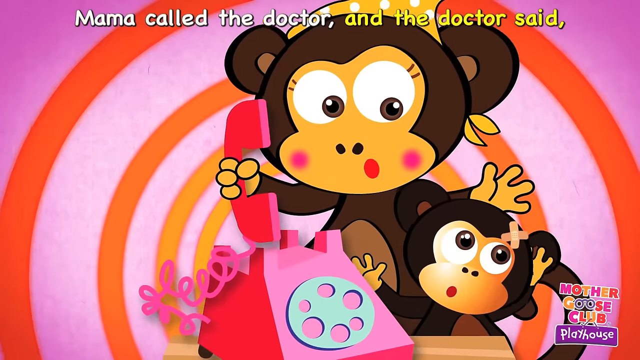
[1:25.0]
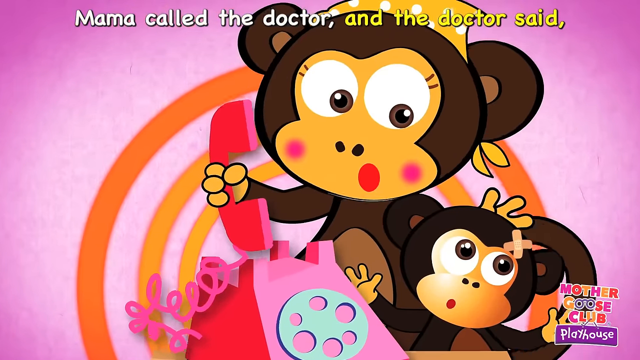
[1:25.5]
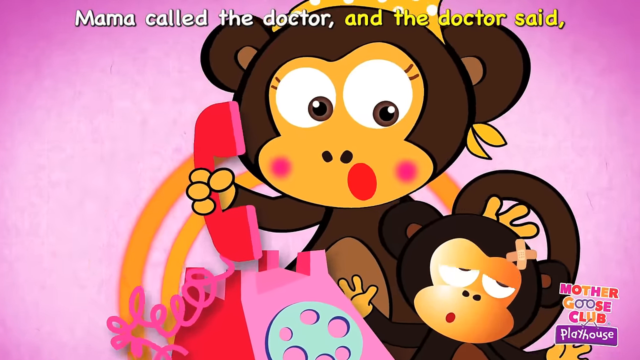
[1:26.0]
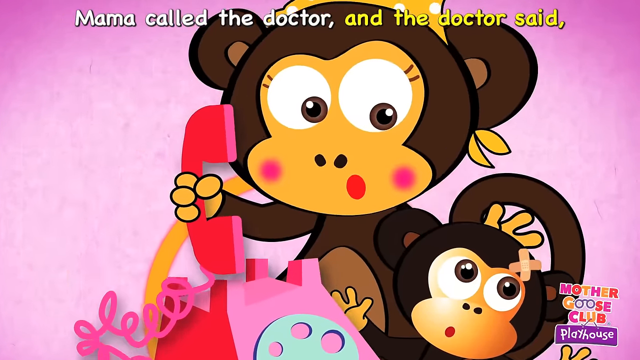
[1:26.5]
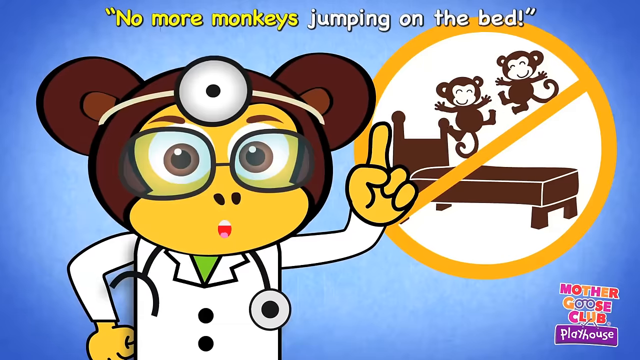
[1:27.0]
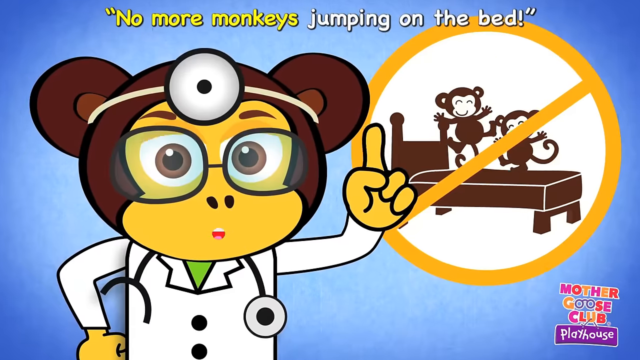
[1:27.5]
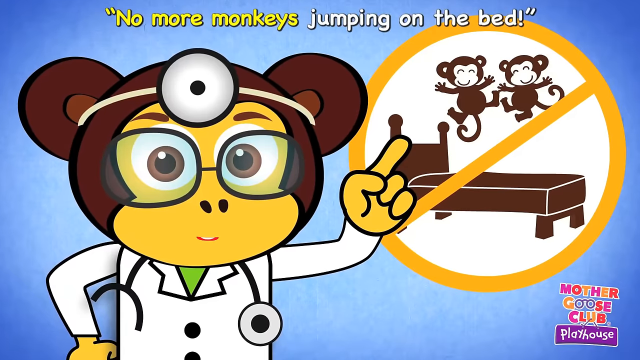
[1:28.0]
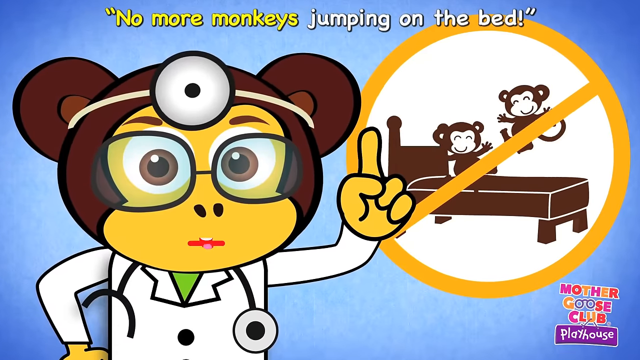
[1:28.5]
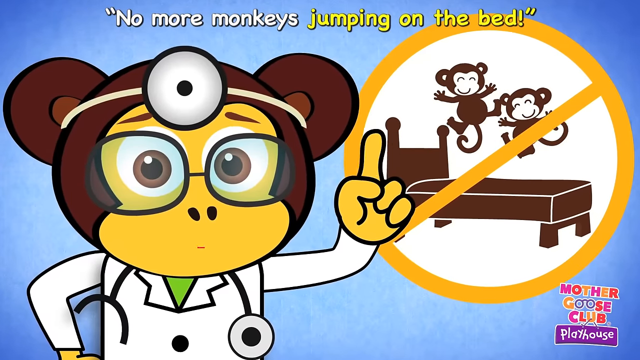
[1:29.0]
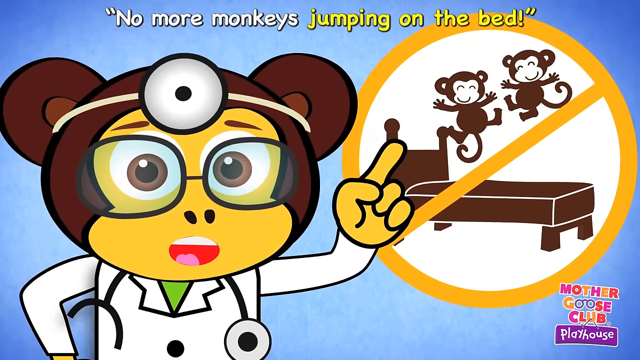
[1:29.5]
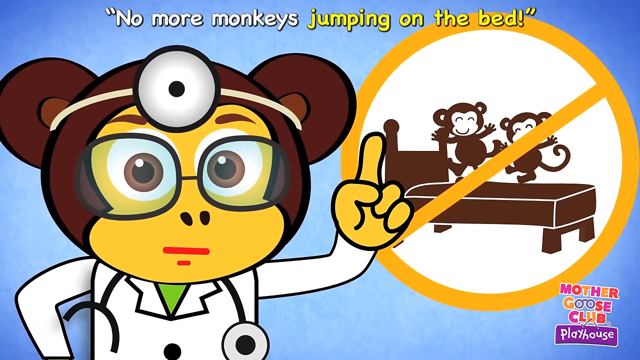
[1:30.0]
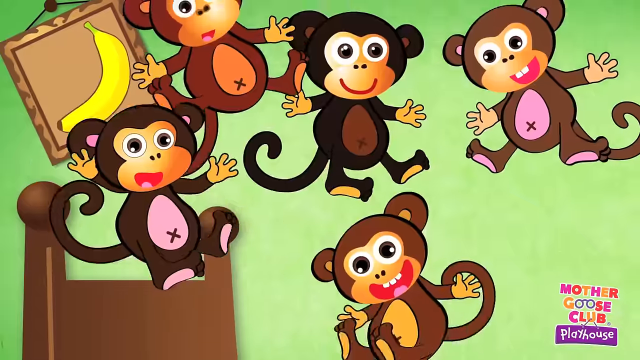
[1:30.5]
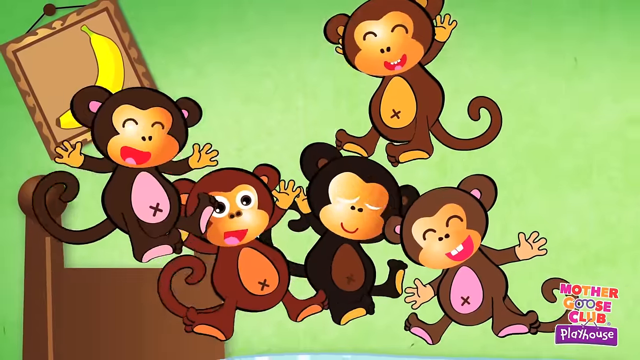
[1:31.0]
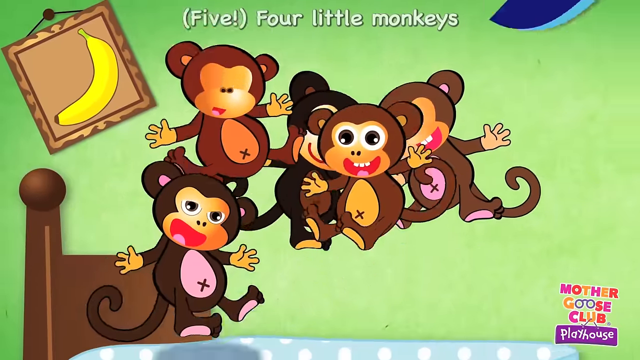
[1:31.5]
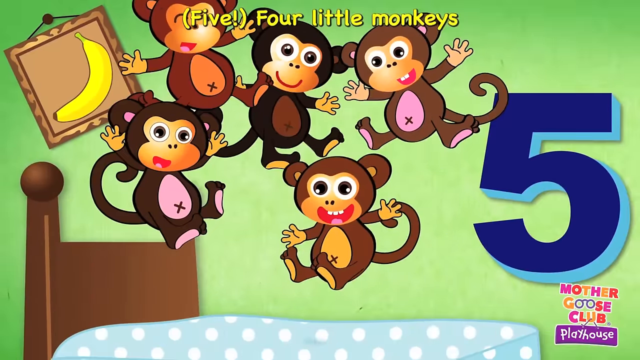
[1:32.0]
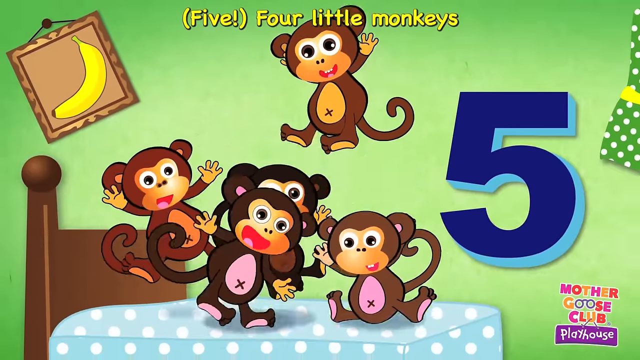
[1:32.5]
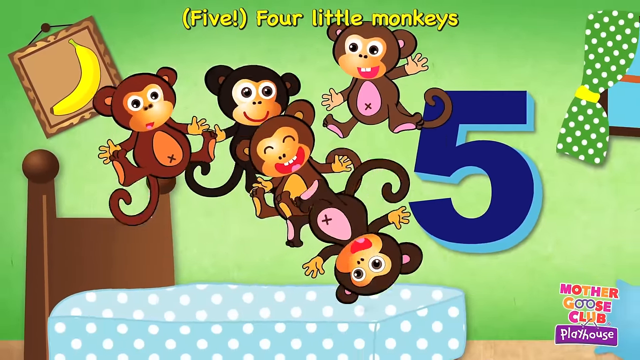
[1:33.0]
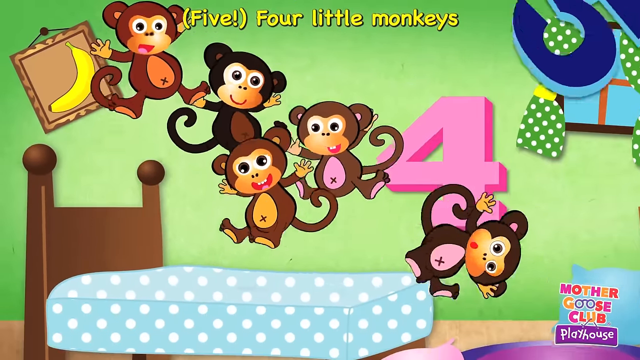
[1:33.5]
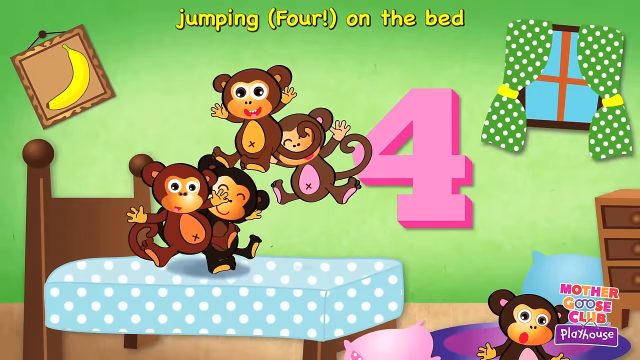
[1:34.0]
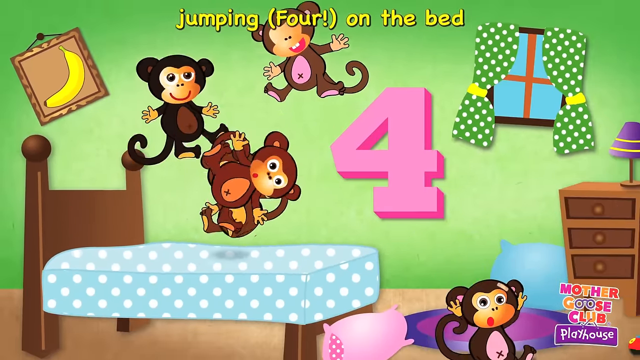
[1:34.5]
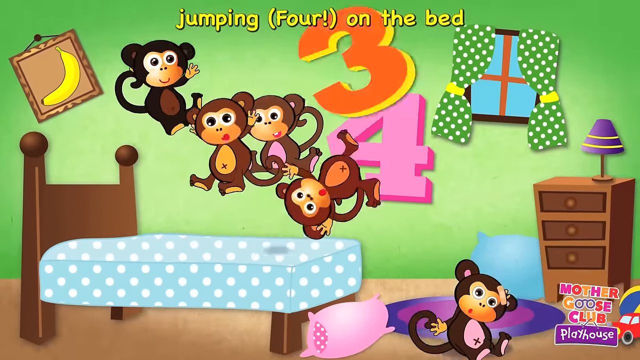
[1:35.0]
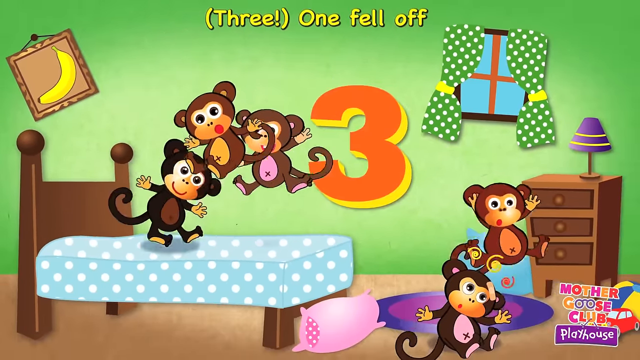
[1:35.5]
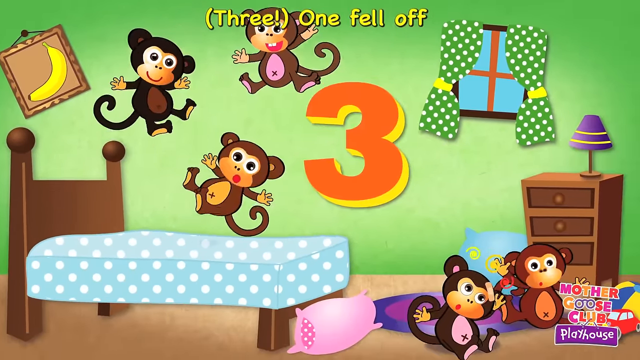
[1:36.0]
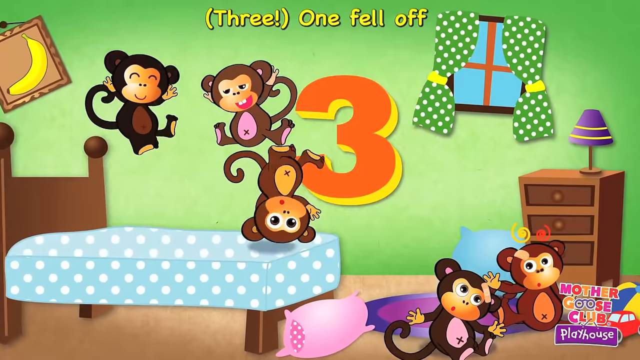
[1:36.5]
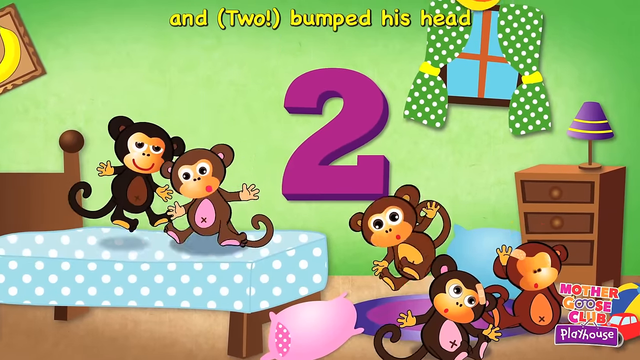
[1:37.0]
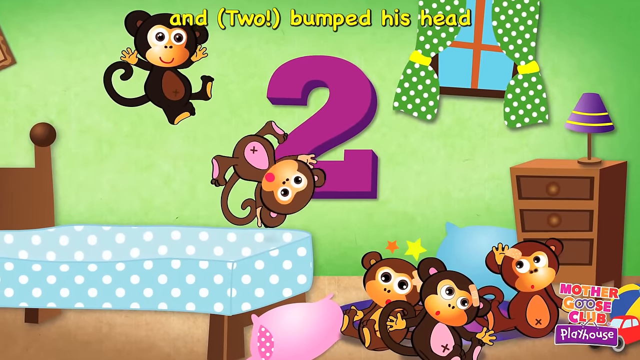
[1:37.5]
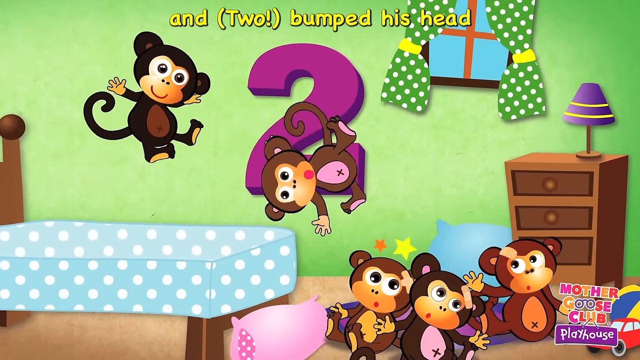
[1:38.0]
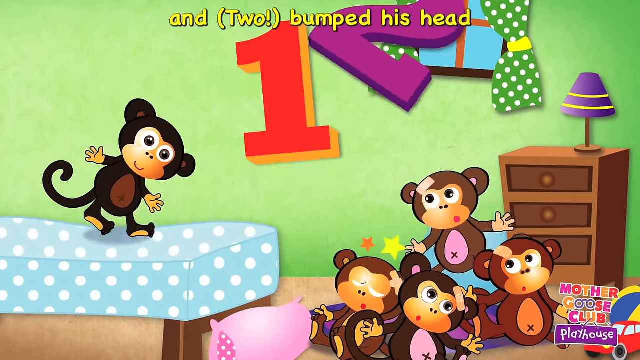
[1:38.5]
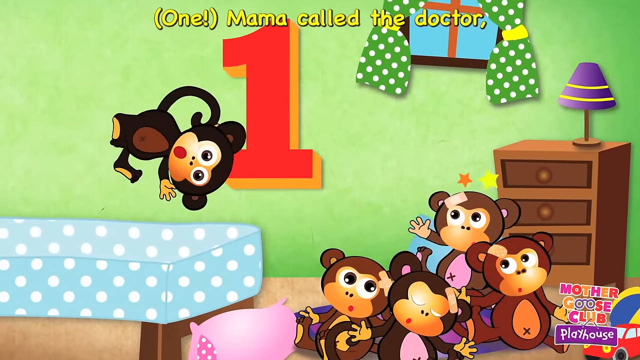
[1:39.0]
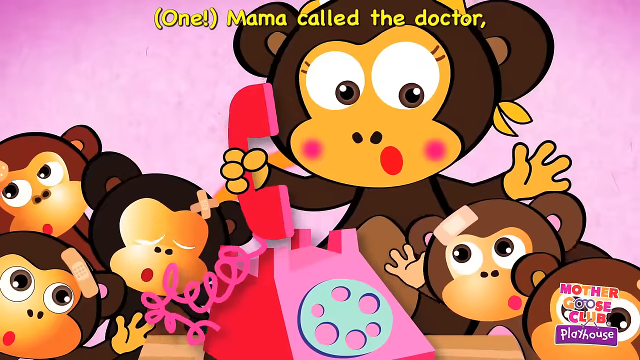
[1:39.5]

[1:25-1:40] The mom talks on the phone with orange circles behind her, and the doctor, on the viewer's left, kind of wags her finger. One after another, all five monkeys fall off the bed, hitting each other and hitting what is in the back; some show stars above their heads and some show little curlicues when they hit. The numbers 5, 4, 3, 2, 1 show in the background as each monkey falls off. A yellow circle with a bar through it, taking up half the screen in the upper right-hand corner, shows two monkeys jumping on the bed: a brown bed with brown monkeys with white faces. The doctor waves her left arm toward the viewer, wagging one finger, kind of signaling no monkeys jumping on the bed.